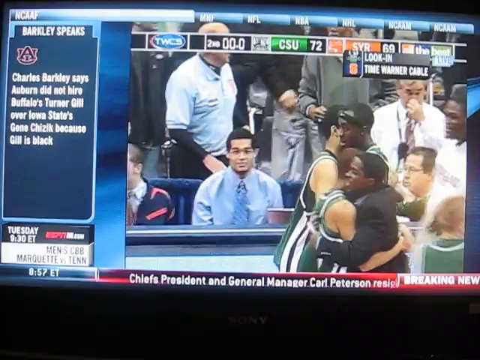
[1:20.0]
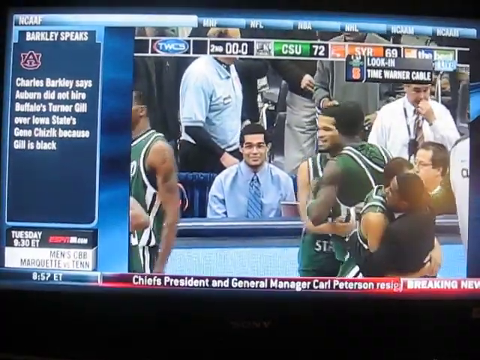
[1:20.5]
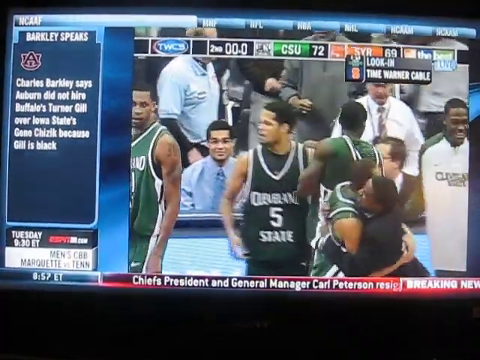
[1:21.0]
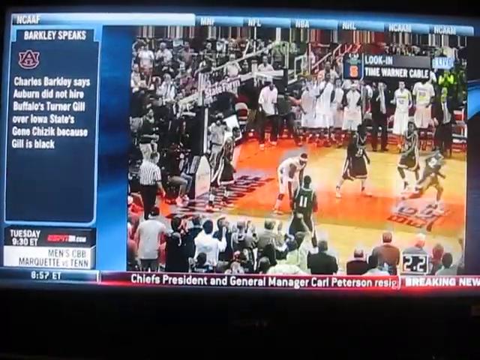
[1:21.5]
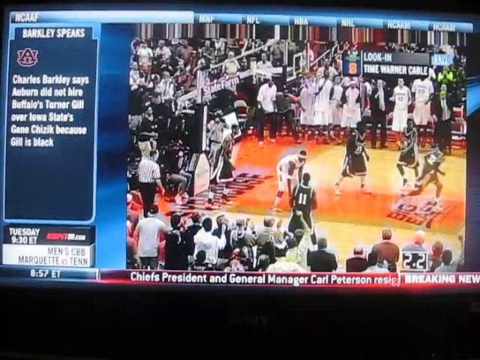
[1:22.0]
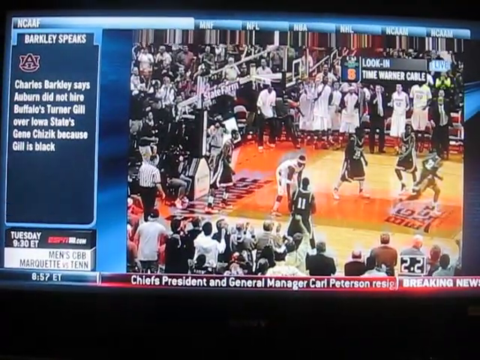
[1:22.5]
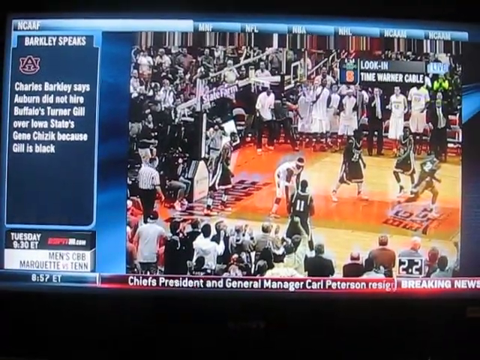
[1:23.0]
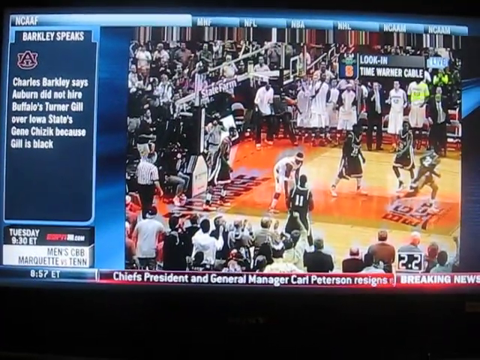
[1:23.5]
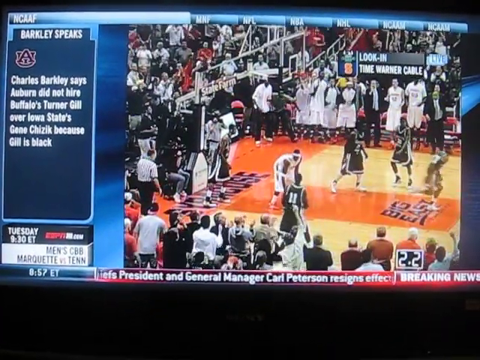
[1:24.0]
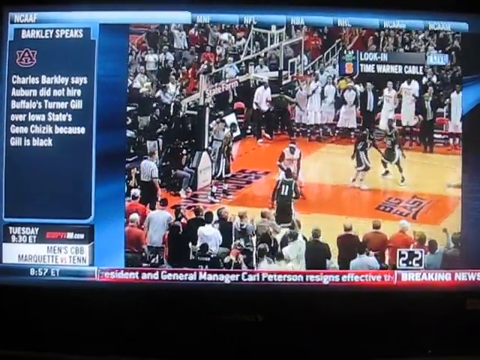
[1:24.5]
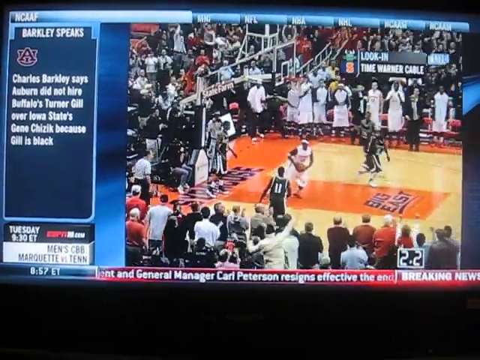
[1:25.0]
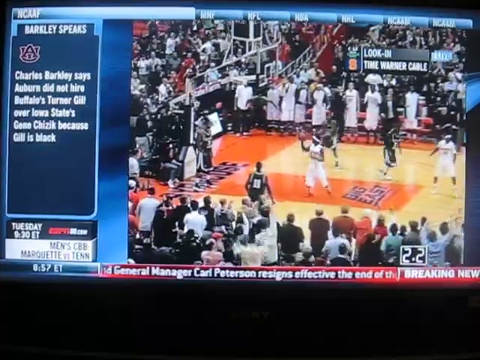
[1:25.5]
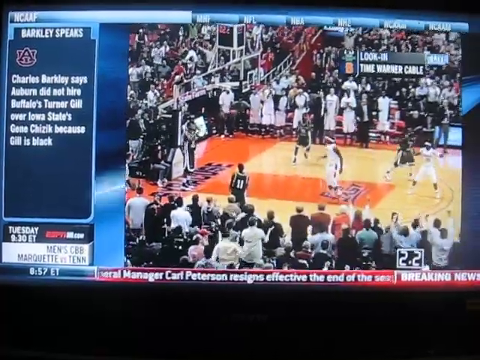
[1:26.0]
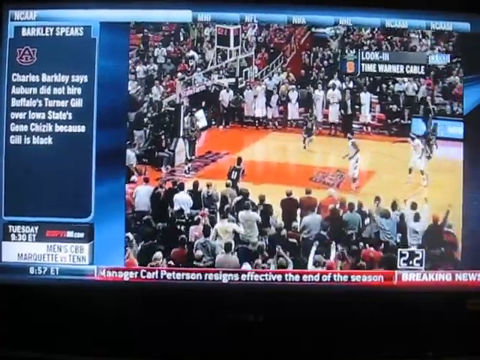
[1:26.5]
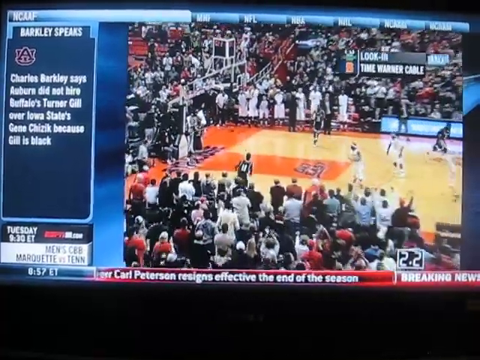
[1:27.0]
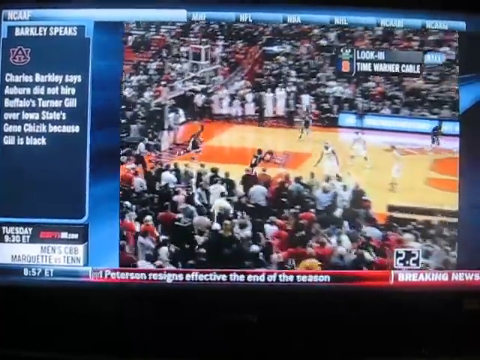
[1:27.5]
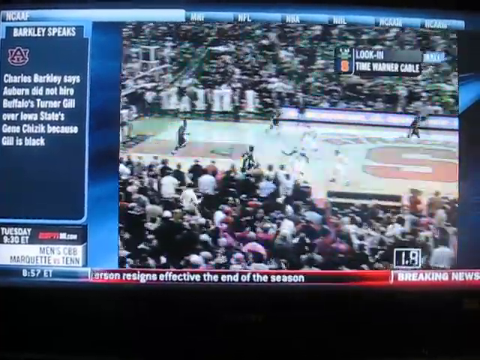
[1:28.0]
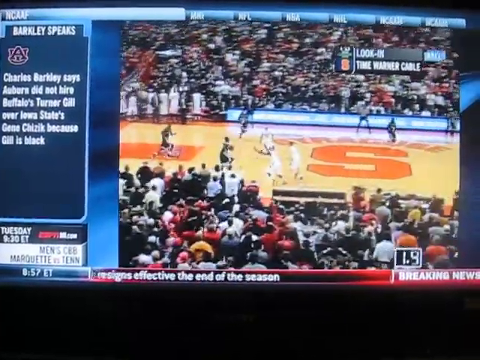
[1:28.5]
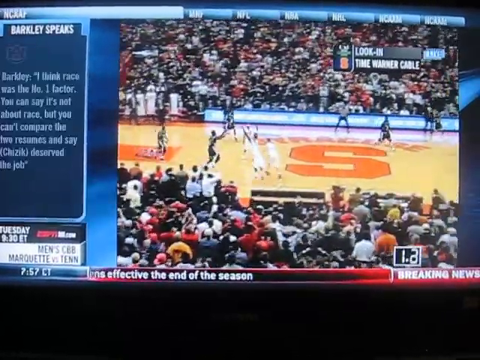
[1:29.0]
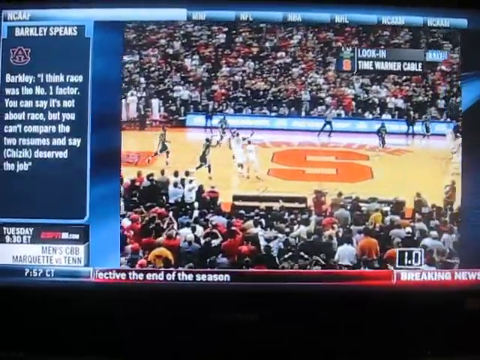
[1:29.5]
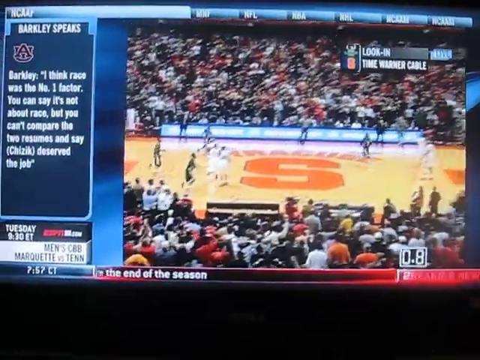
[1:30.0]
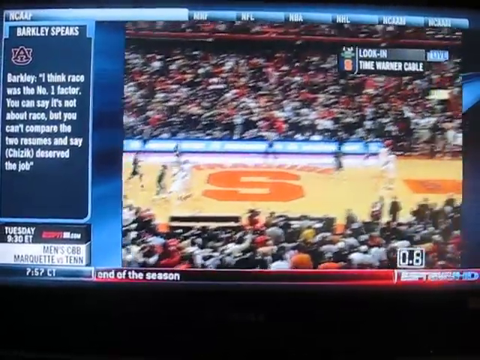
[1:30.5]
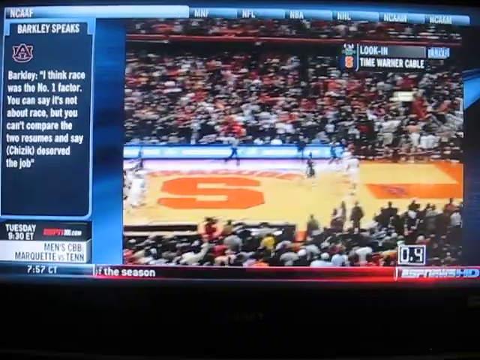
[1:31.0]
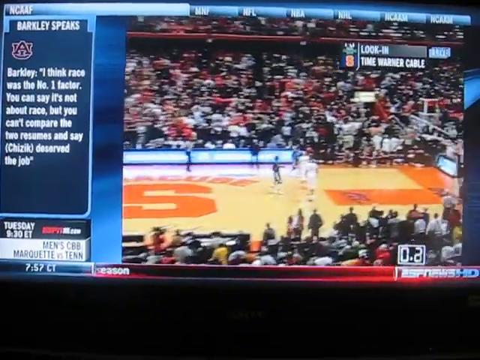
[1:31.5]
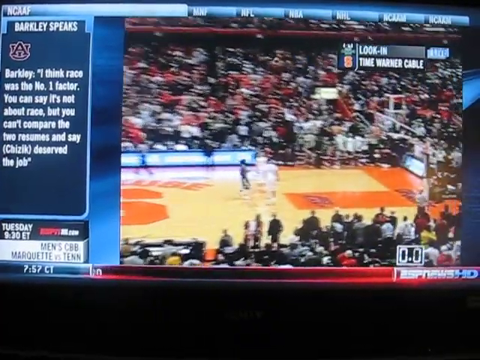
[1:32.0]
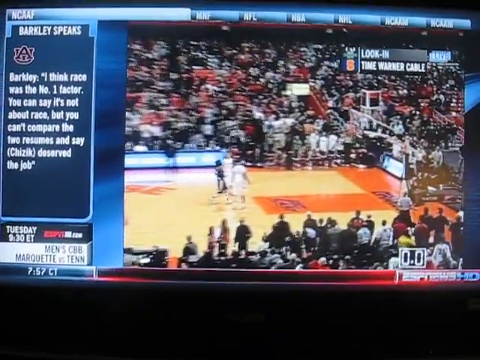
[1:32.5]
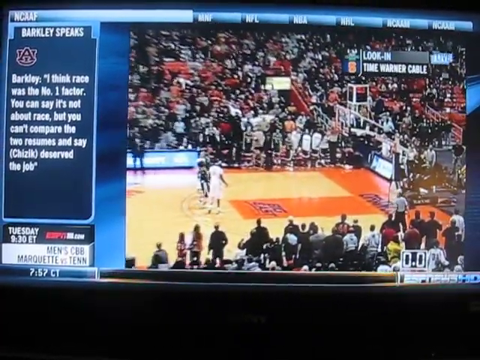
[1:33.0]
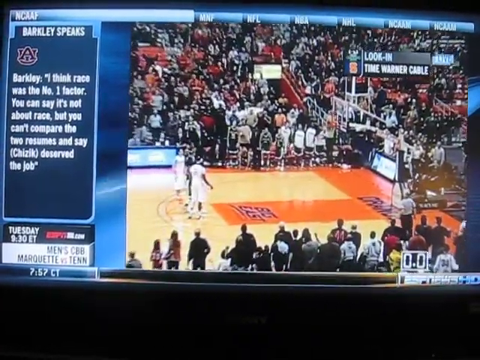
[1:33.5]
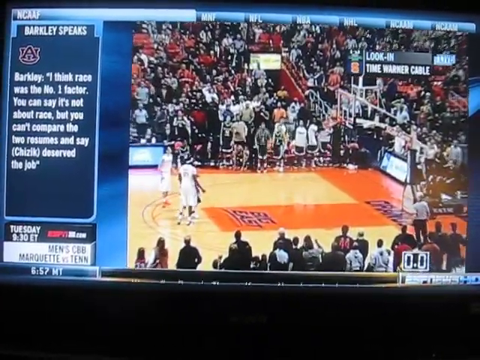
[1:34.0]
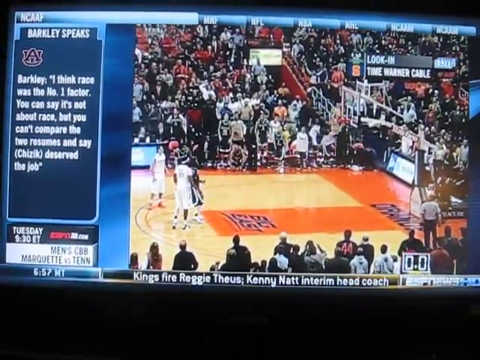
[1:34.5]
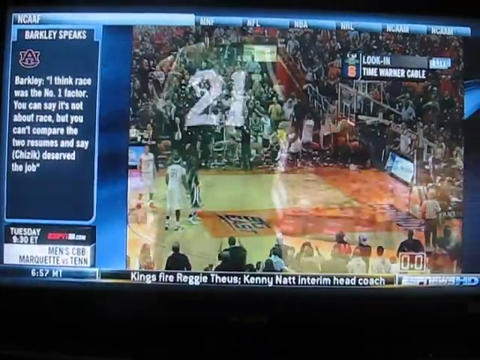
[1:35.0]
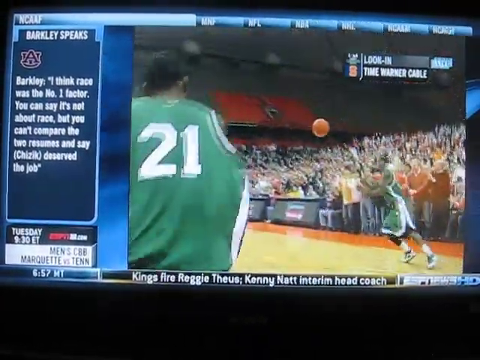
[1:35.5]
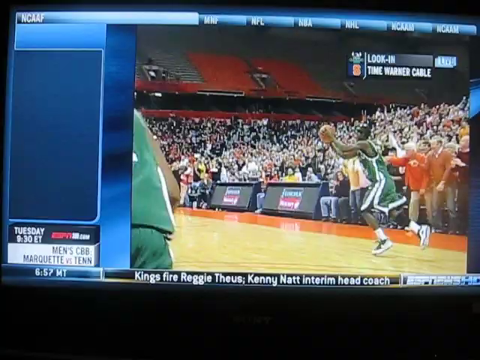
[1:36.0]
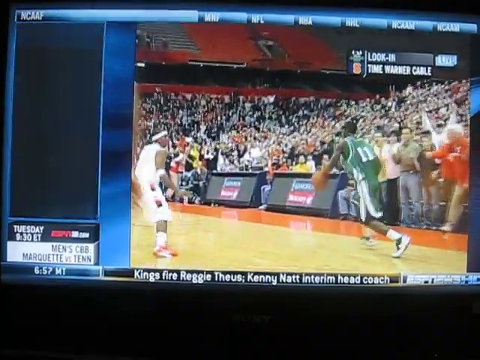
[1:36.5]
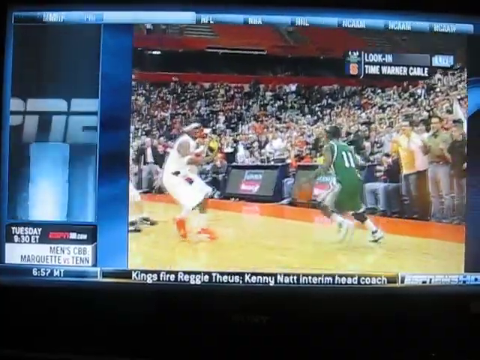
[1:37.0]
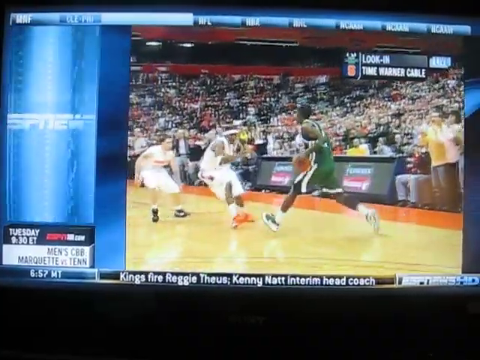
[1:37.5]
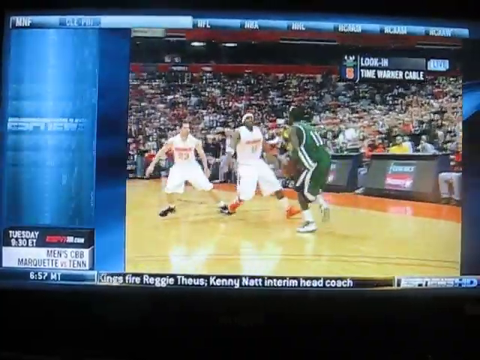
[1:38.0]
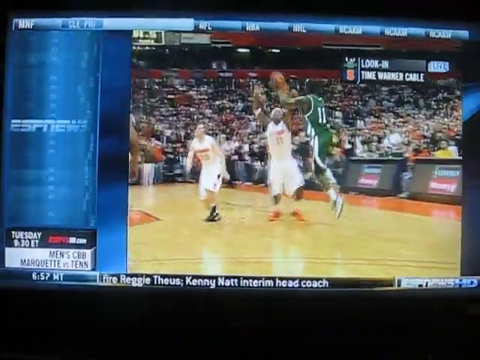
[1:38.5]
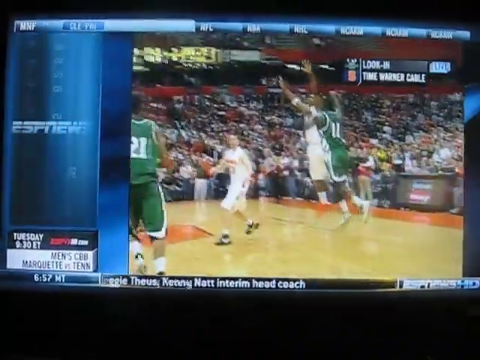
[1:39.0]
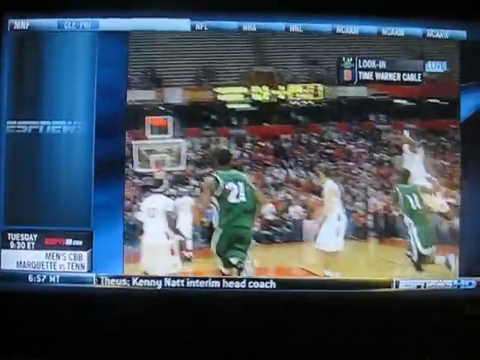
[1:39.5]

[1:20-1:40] The breaking news that Chiefs President and General Manager Carl Peterson resigned is on screen, and the NCAA sidebar reads "Barkley speaks, Charles Barkley says" followed by more text. The score shows the second quarter with CSU at 72 points and Syracuse at 69. Two players in green jerseys hug a man in a black suit, and another player hugs a player in a green jersey. People are in the stands and on the sidelines. The final pass is shown: a player in a green jersey throws the ball all the way down to the other side of the court, three players in white jerseys jump for it but it is too high, and the ball is caught by someone in a black outfit standing along the sideline.